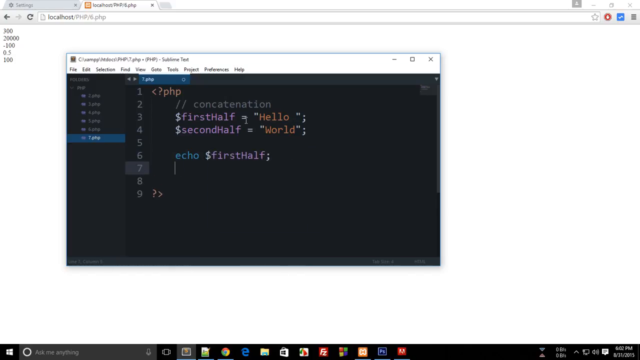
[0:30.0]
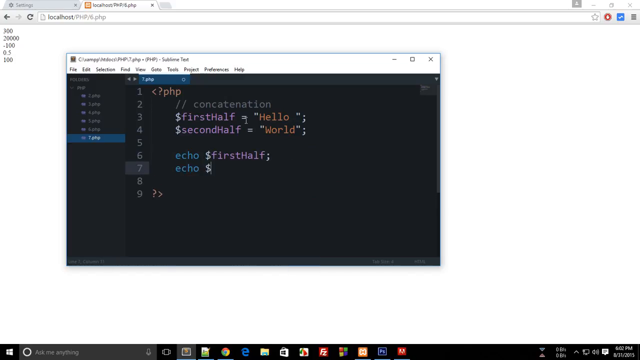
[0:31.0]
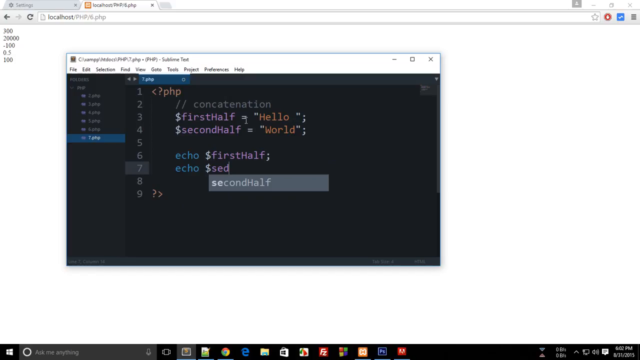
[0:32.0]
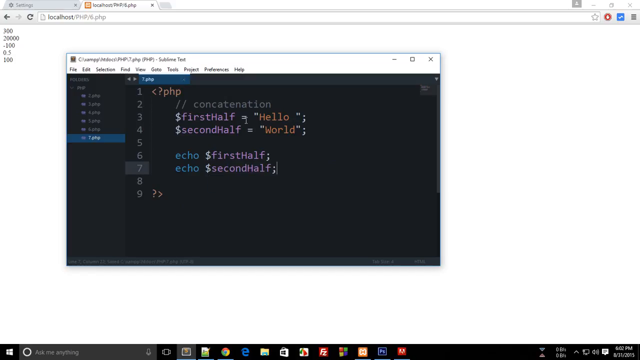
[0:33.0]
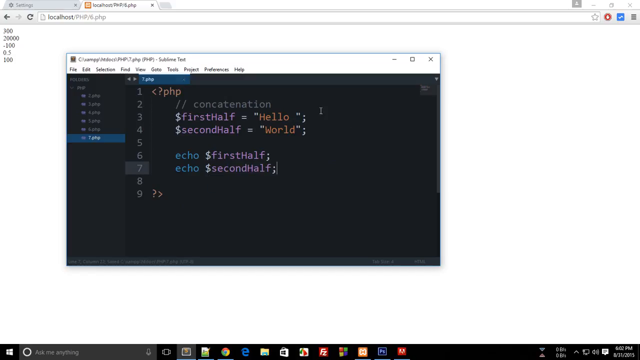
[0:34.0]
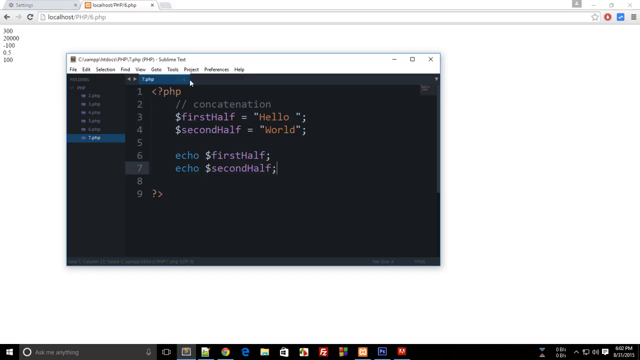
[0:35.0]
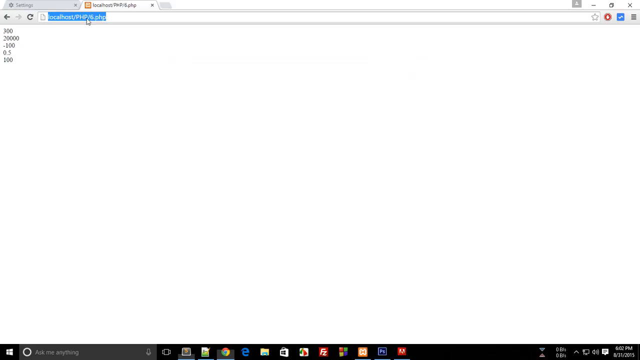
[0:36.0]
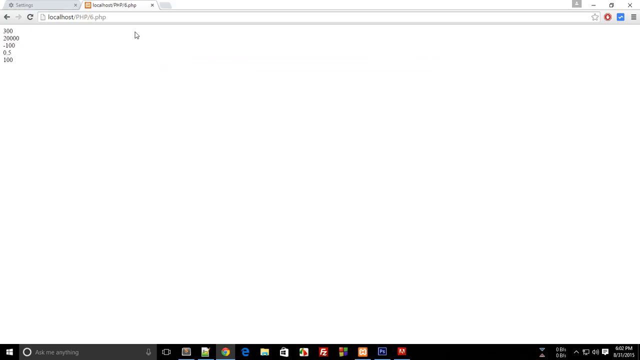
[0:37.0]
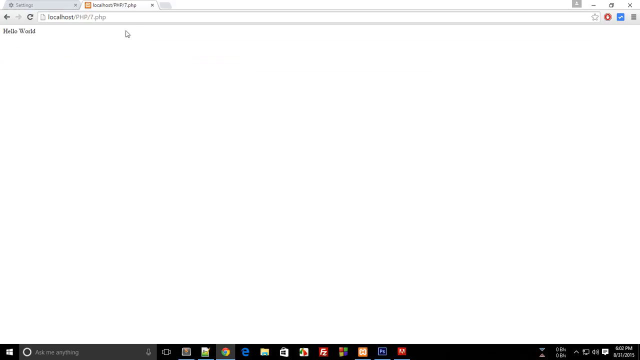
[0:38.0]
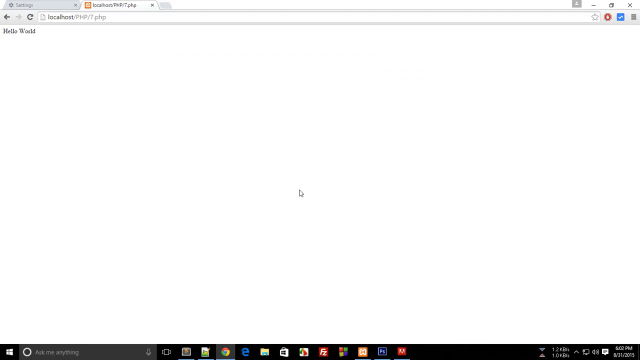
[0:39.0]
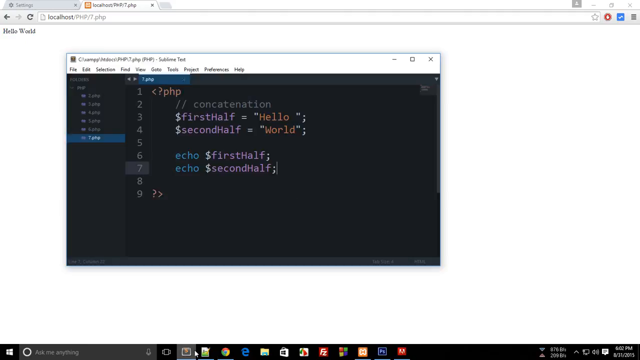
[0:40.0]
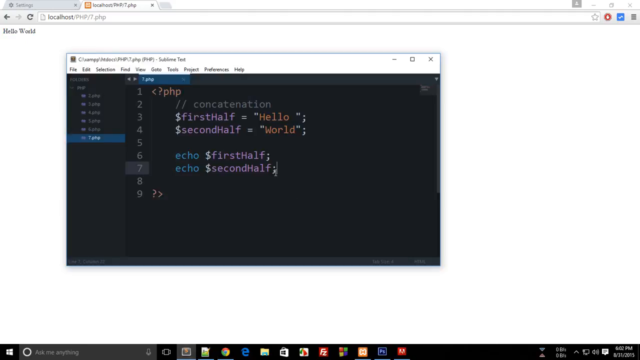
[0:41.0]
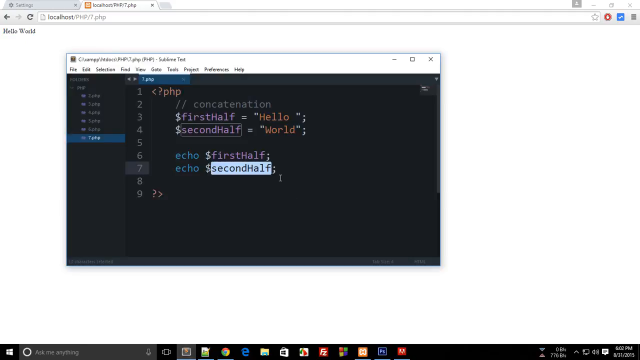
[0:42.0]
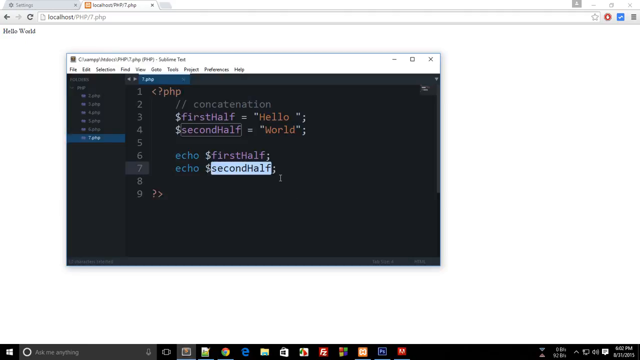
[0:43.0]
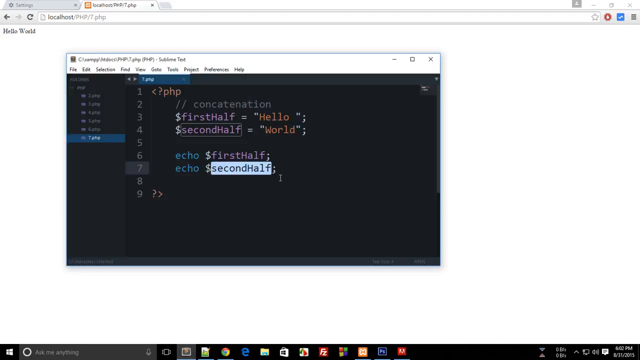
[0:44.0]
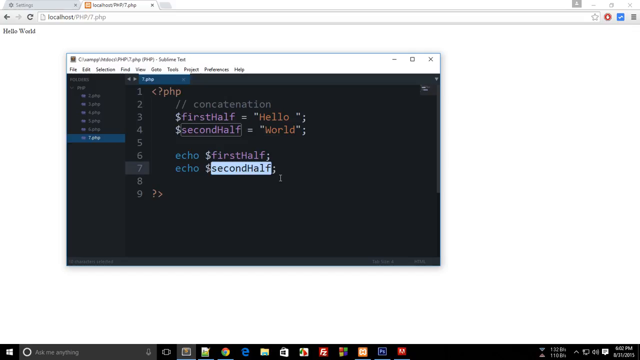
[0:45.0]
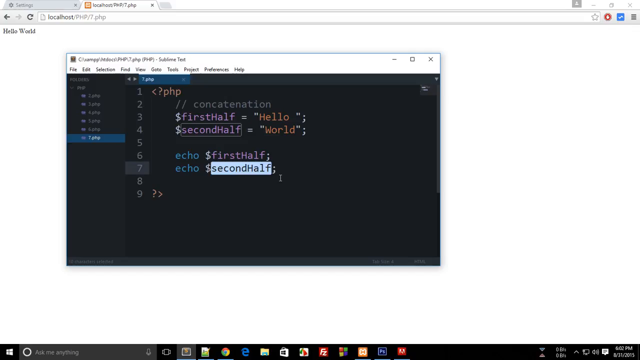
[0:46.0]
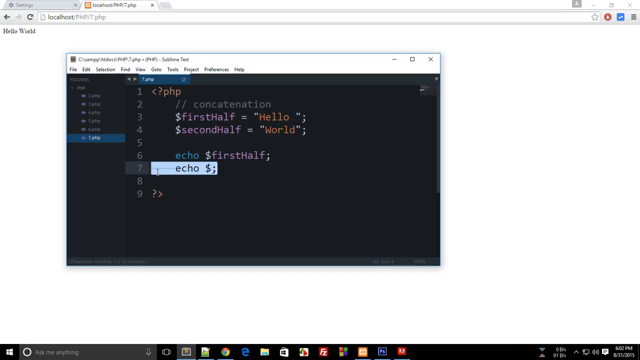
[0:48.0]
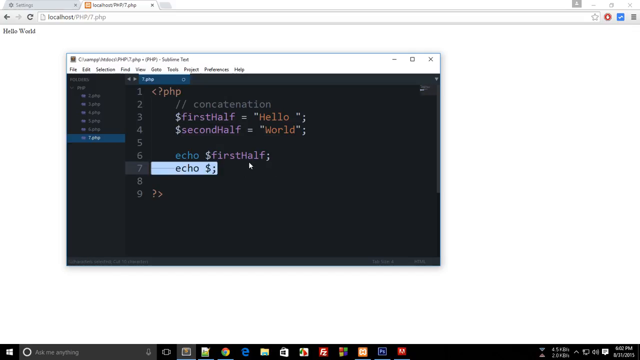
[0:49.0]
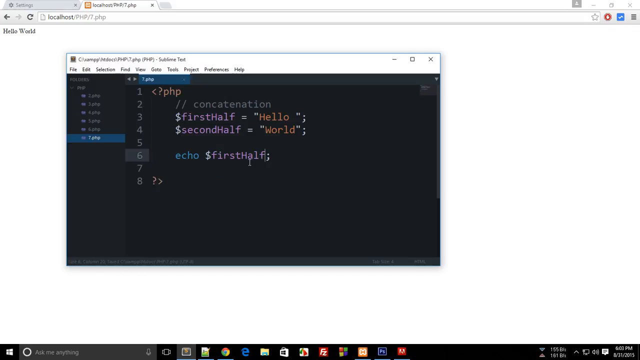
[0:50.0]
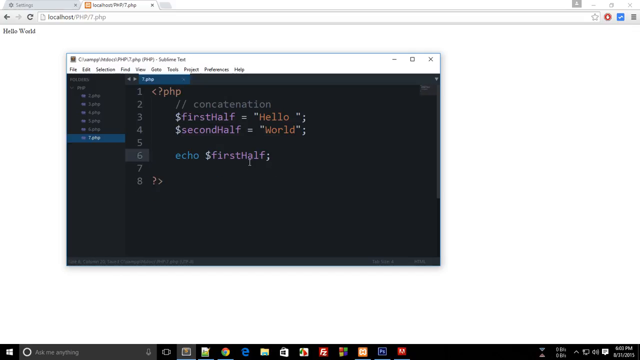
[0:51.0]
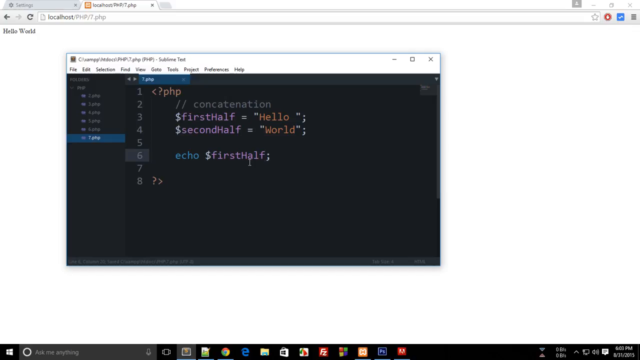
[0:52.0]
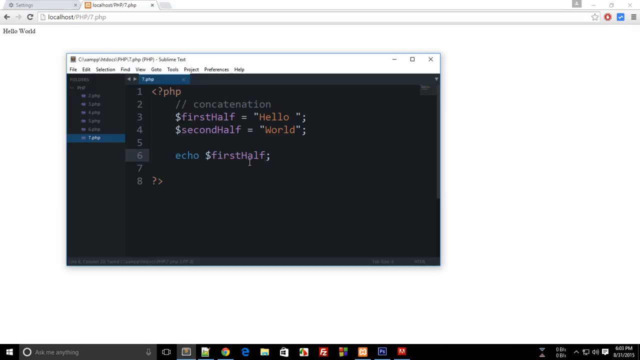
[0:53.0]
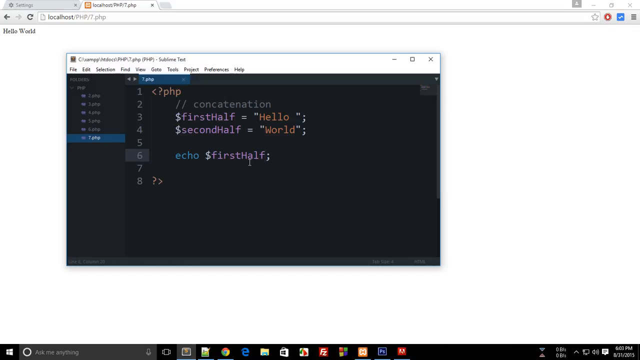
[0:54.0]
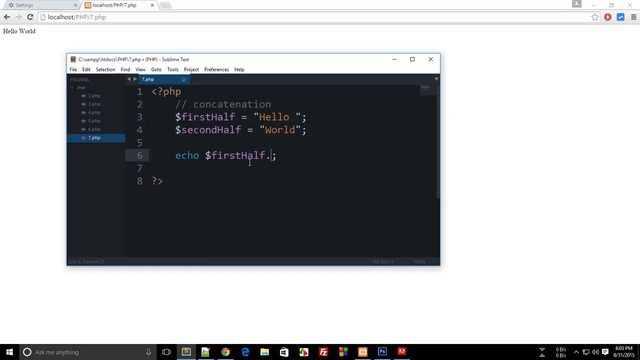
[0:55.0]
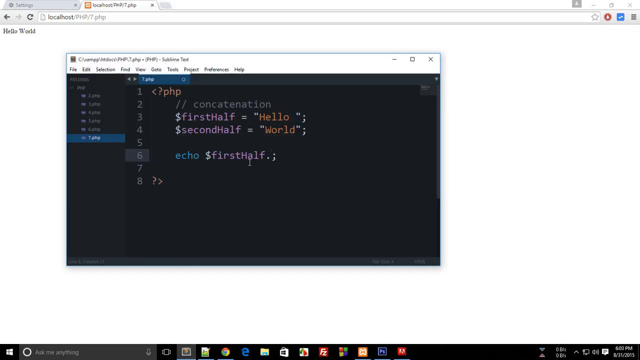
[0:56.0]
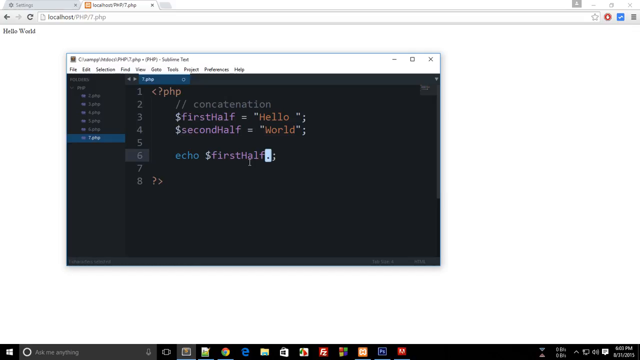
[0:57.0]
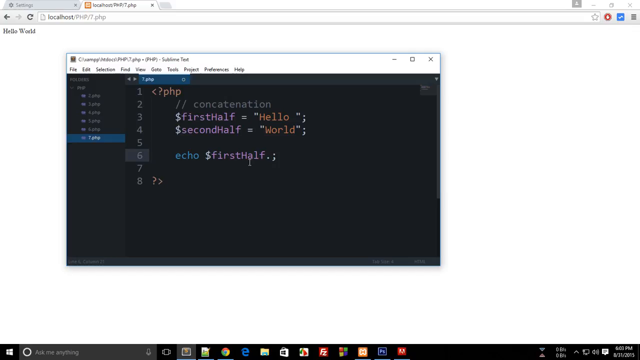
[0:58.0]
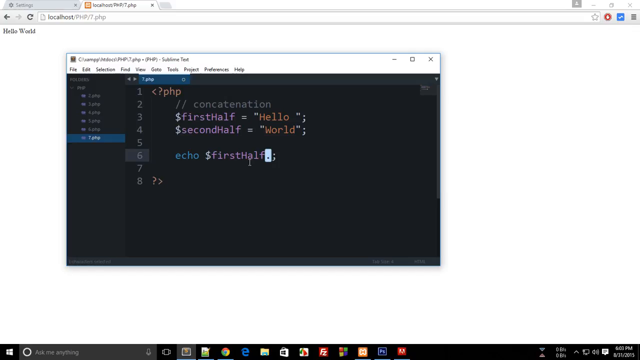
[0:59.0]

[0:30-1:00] The individual types echo, dollar sign, first half, and dollar sign, second half. They then go to the browser and load their PHP program, 7.php, on localhost, where the values appear to have concatenated into "hello world". They go back to the code, delete the second half segment, and modify the first half segment, possibly for another example. There appear to be other PHP files as well, numbered 1 through 7, with 7 being the one currently being worked on; they are run and tested in the browser using localhost.